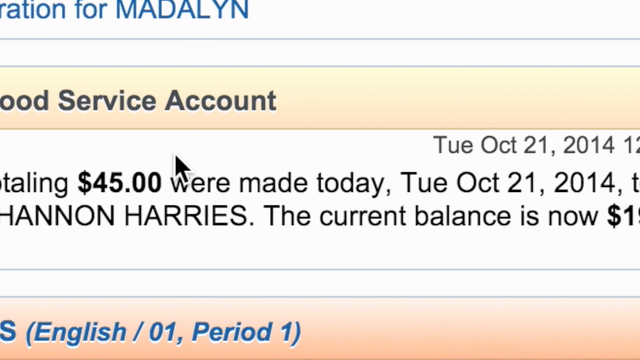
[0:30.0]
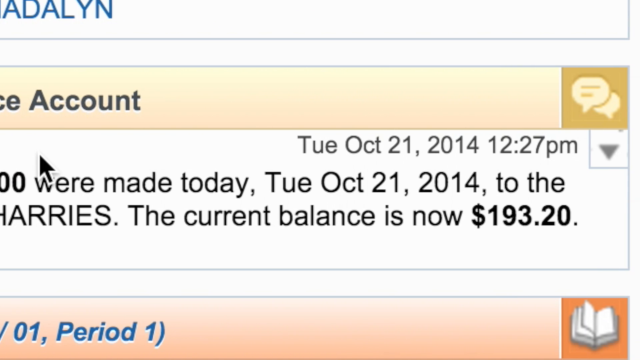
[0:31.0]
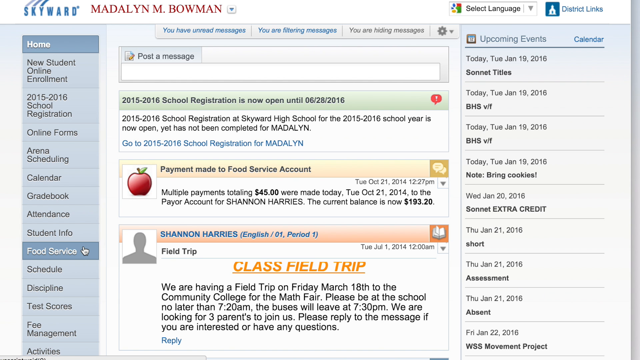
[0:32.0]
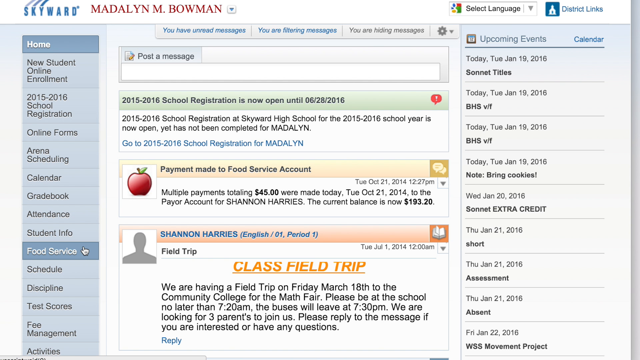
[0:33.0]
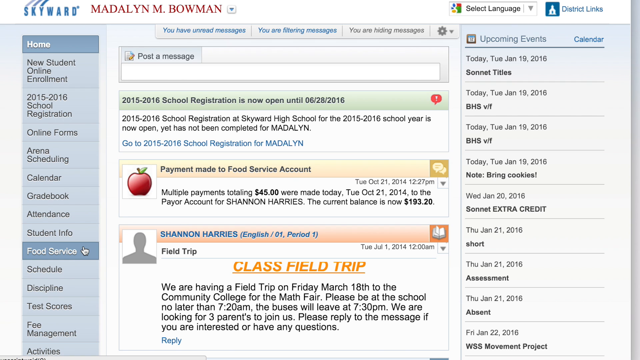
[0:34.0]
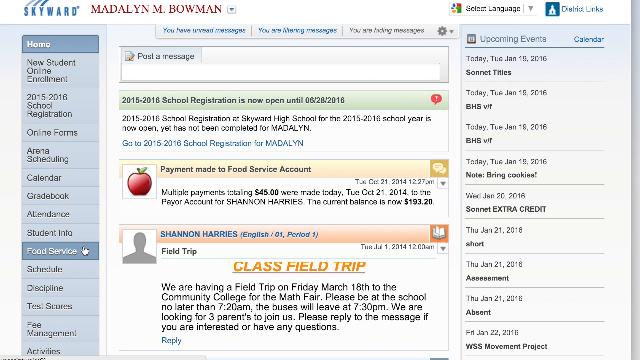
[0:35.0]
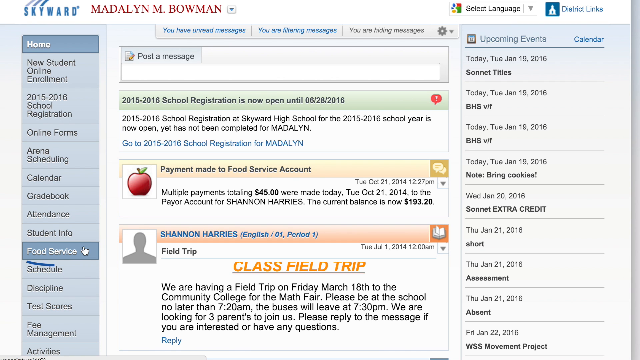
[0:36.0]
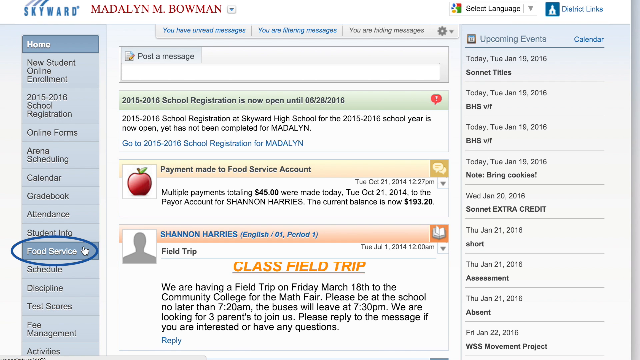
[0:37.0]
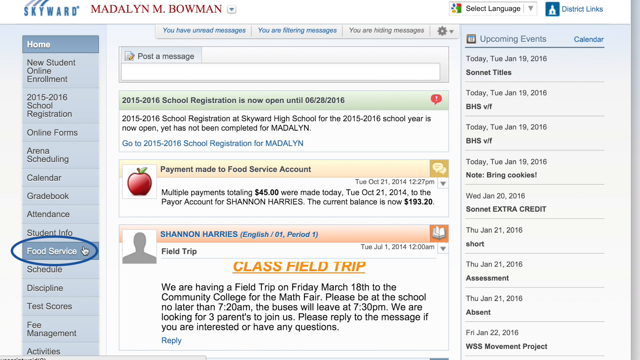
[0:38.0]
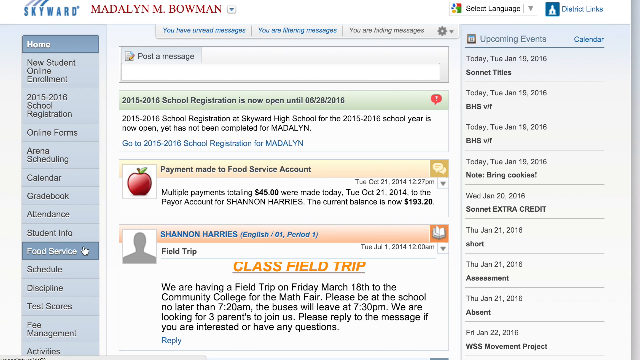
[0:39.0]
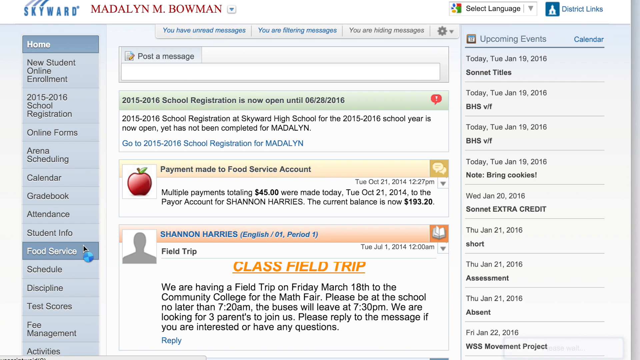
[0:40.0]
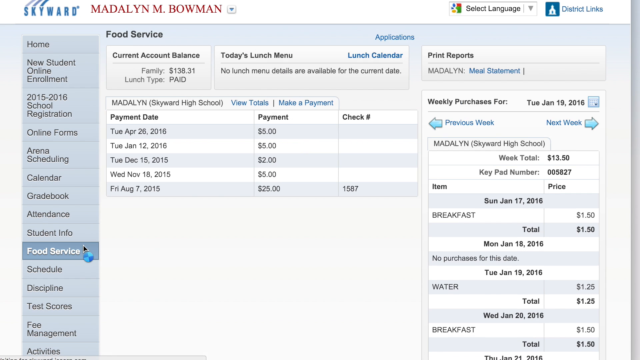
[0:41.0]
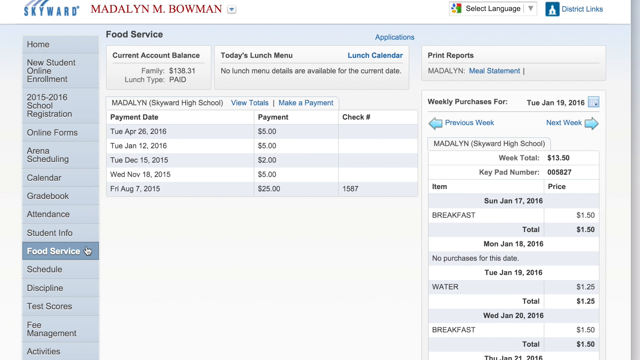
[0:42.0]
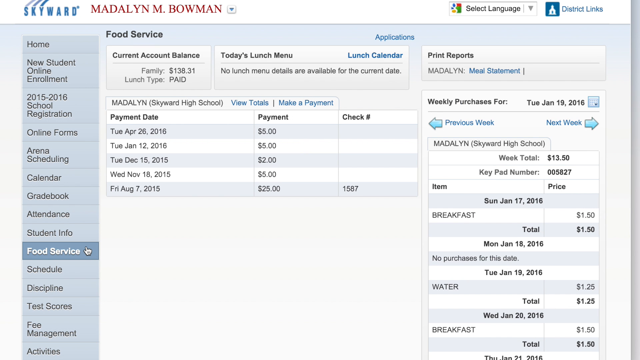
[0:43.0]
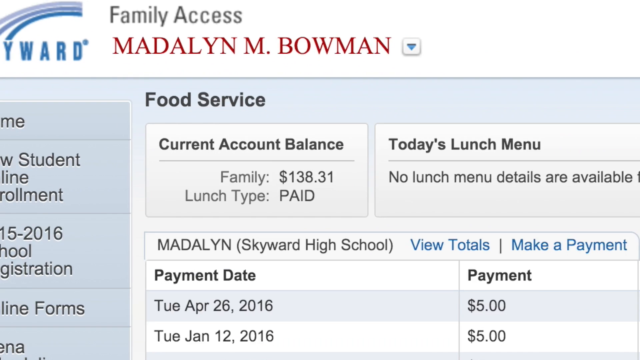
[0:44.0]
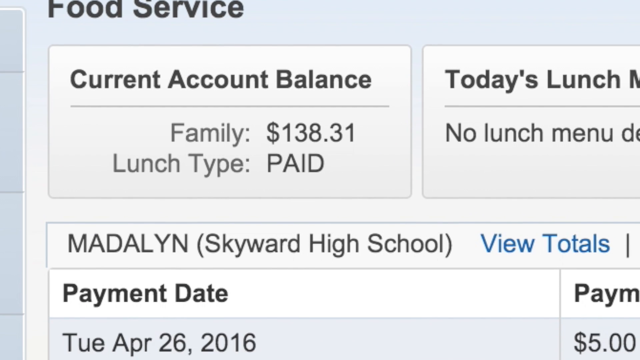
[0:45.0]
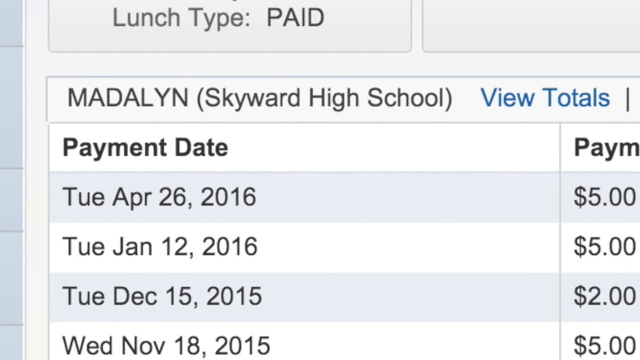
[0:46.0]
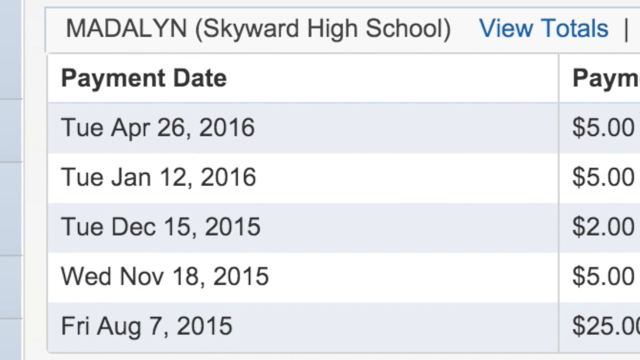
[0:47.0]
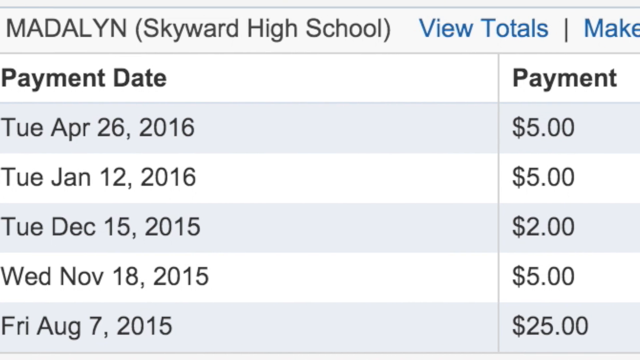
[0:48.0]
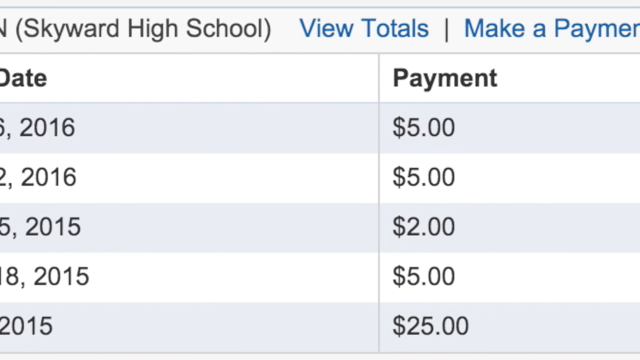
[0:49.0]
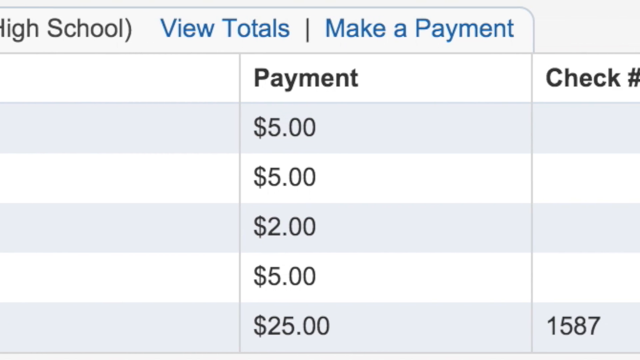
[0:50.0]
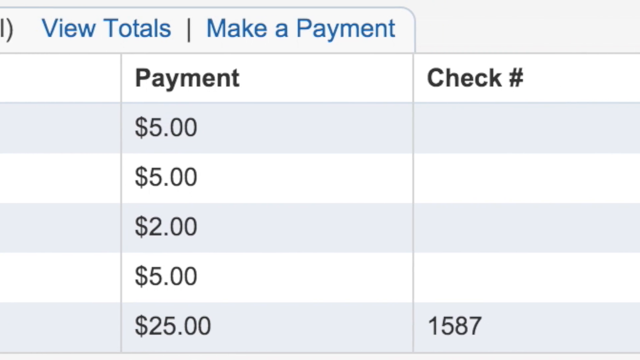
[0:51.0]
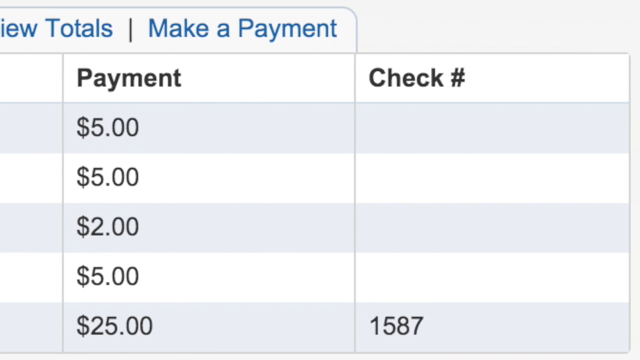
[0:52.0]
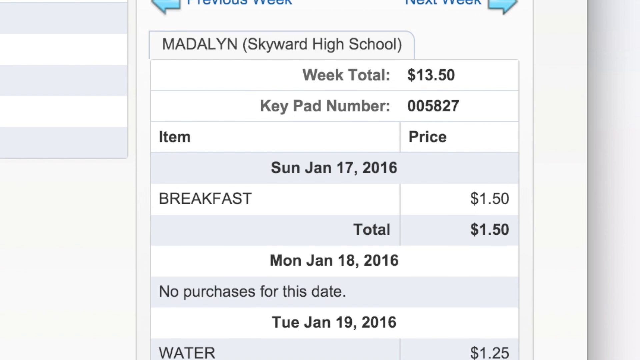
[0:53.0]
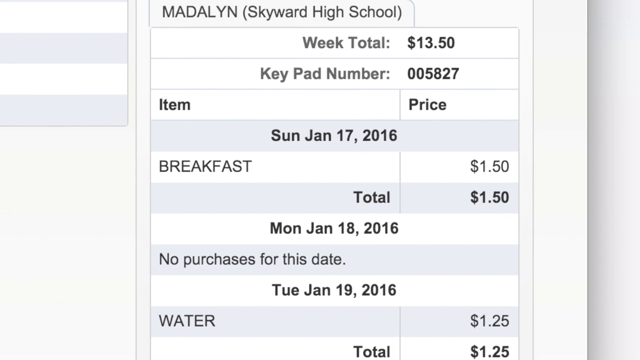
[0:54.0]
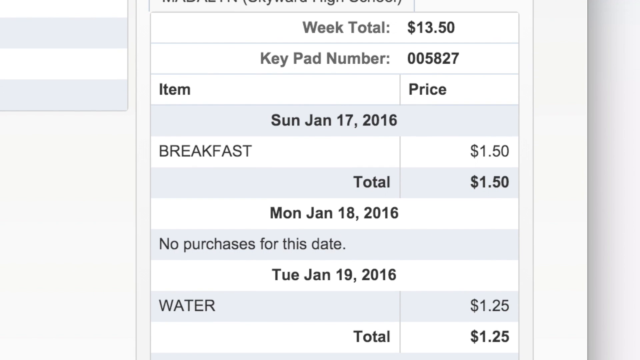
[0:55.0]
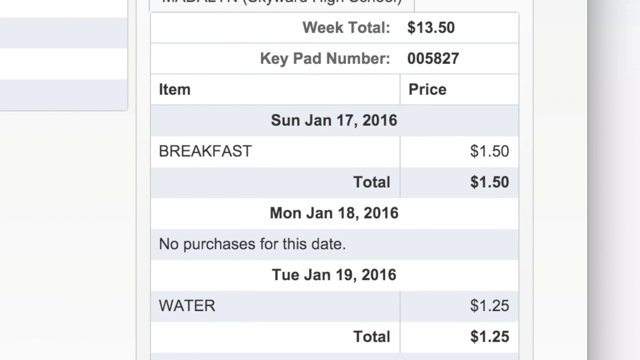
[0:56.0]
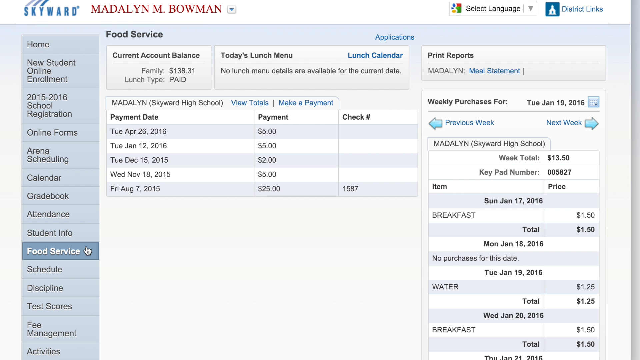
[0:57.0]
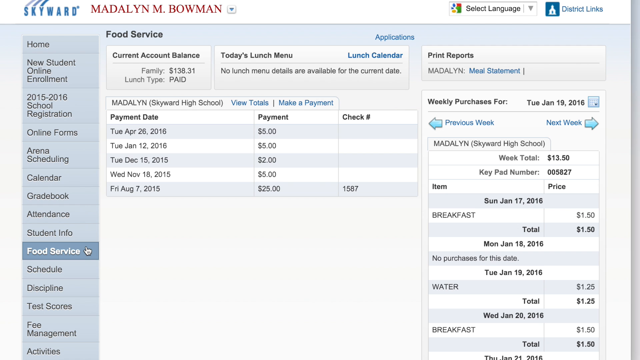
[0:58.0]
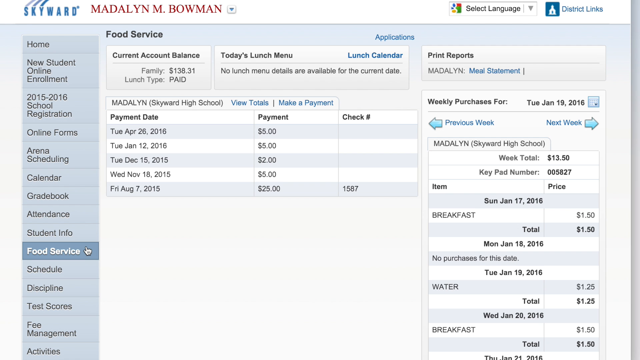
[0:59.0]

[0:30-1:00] Madeline M. Bowman's Skyward access page is shown. The left-hand side lists new student online enrollment, registration, online forms, scheduling, calendar, gradebook, attendance, and student life. The middle shows that school registration is now open, payments made to a food service account, and a class field trip. The right-hand side has upcoming events, essentially a calendar. The video goes into the food service account, which shows the current account balance for the family and that it is paid, today's lunch menu, an option to print receipts, weekly purchases, and a transaction list, both showing breakfast and waters. It then shows the dates payments were made, all for Skyward High School, along with view totals, make a payment, and the breakfast, water, and other aspects of the food account.